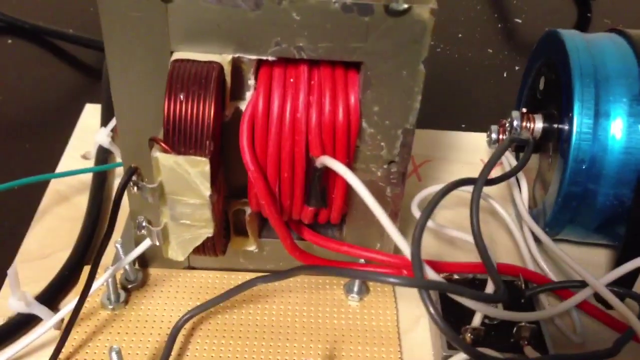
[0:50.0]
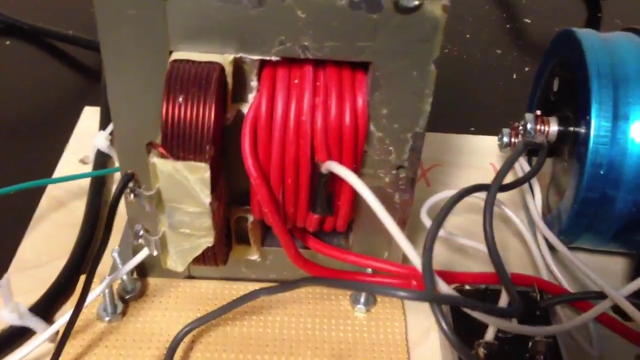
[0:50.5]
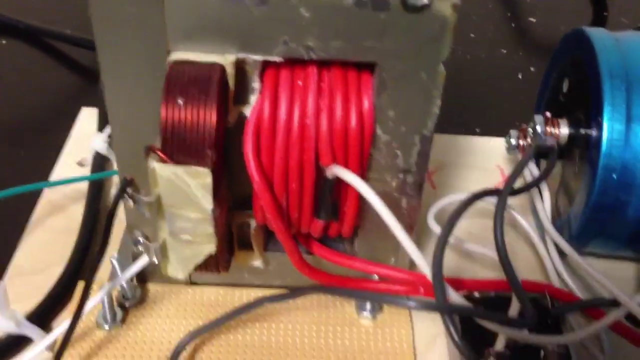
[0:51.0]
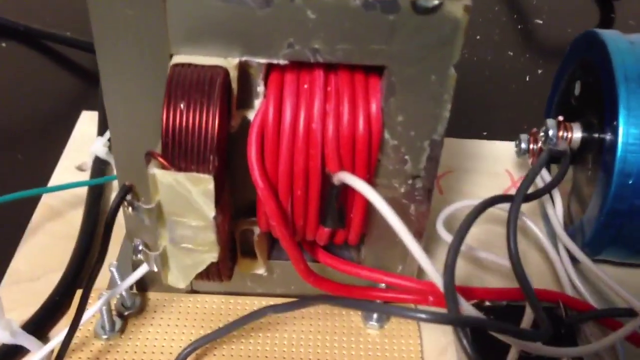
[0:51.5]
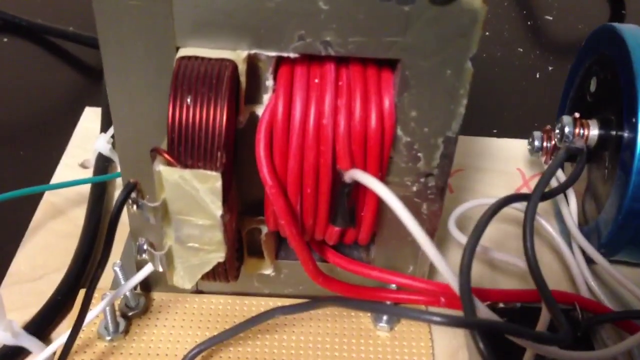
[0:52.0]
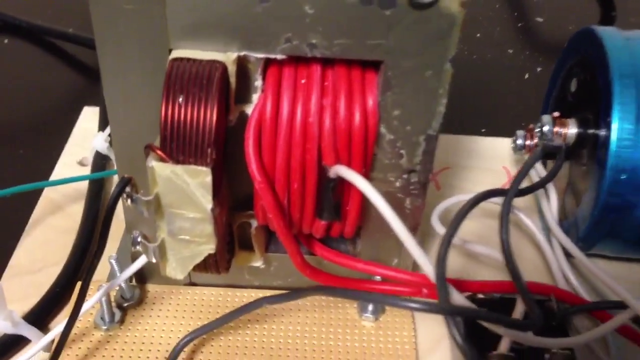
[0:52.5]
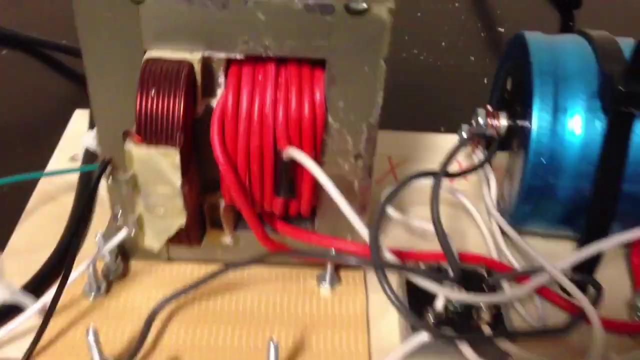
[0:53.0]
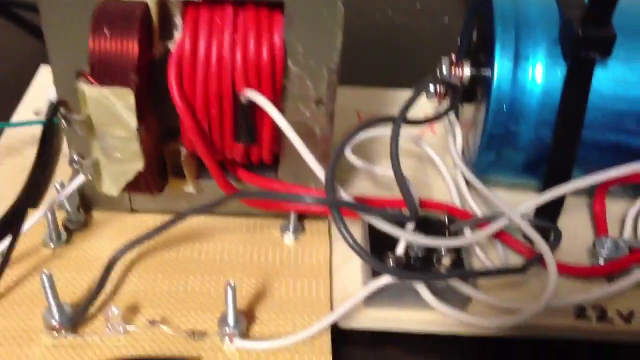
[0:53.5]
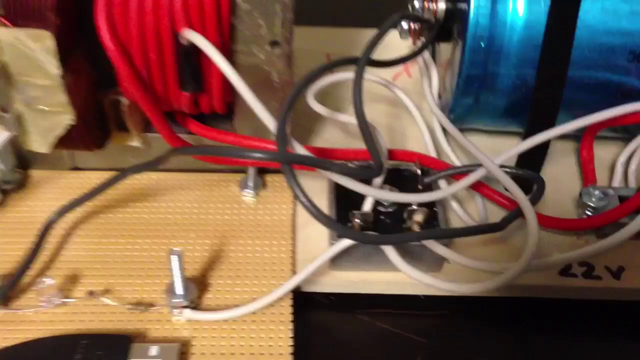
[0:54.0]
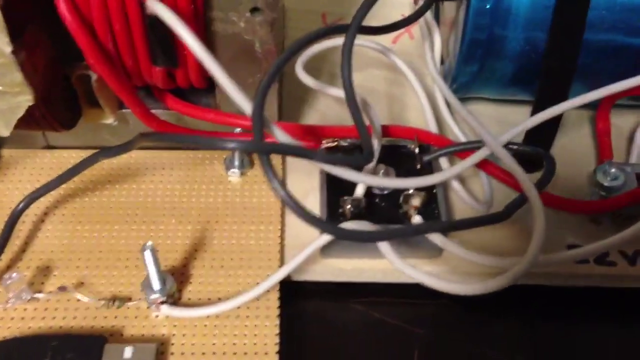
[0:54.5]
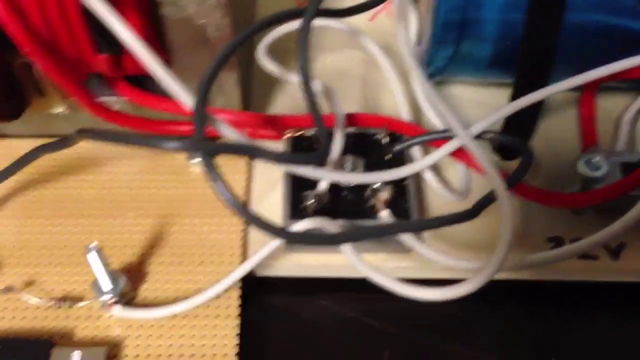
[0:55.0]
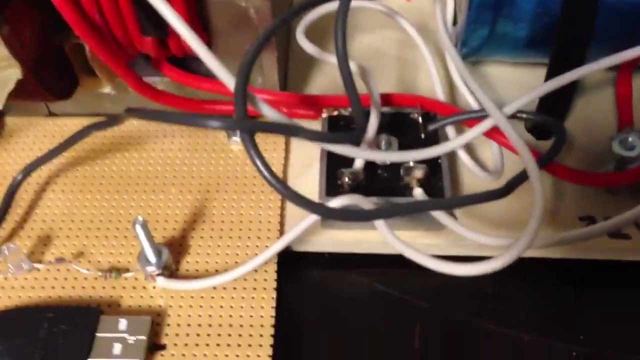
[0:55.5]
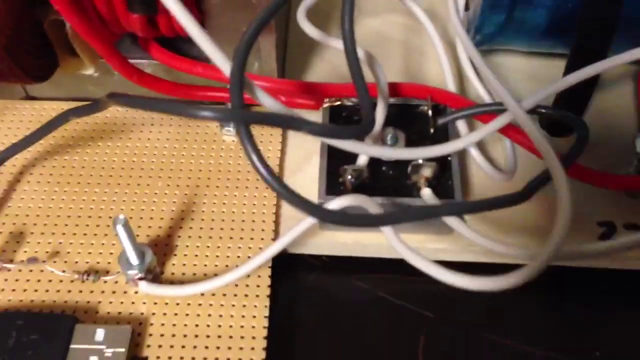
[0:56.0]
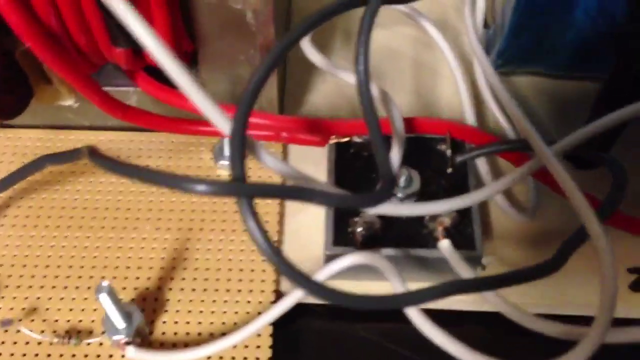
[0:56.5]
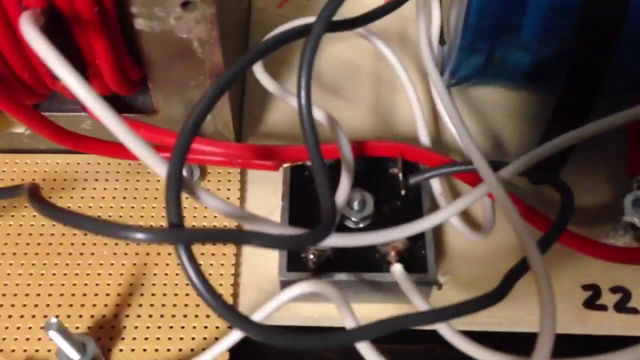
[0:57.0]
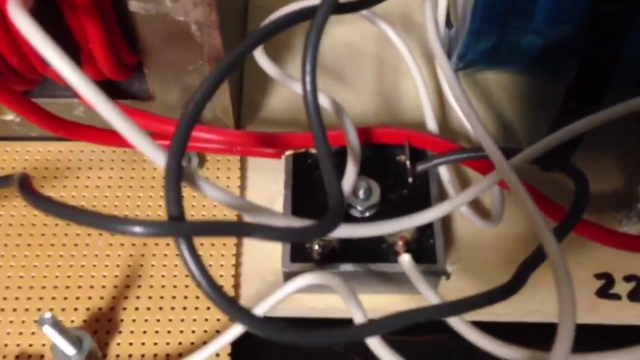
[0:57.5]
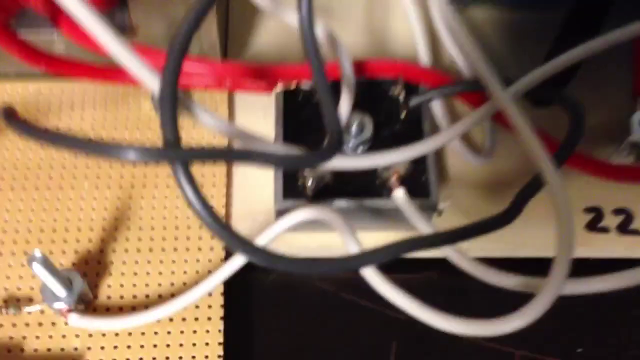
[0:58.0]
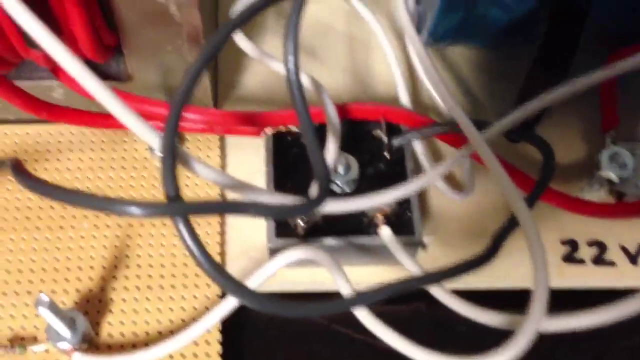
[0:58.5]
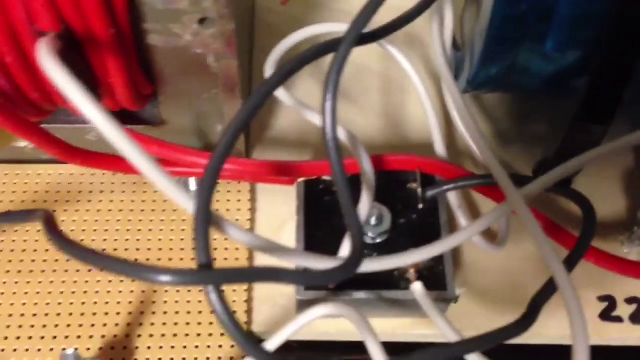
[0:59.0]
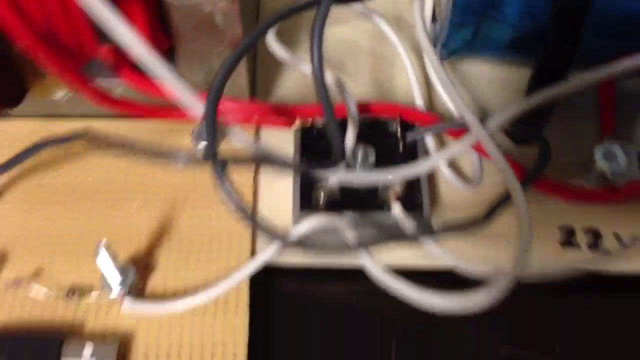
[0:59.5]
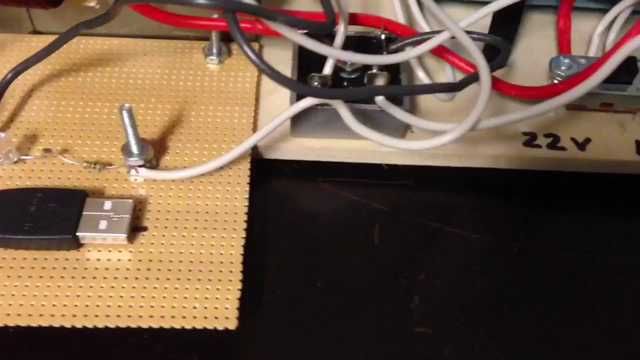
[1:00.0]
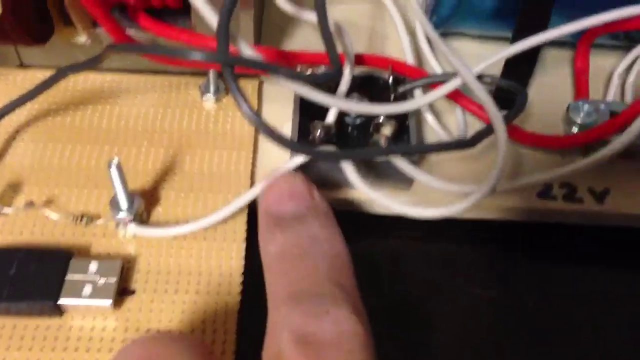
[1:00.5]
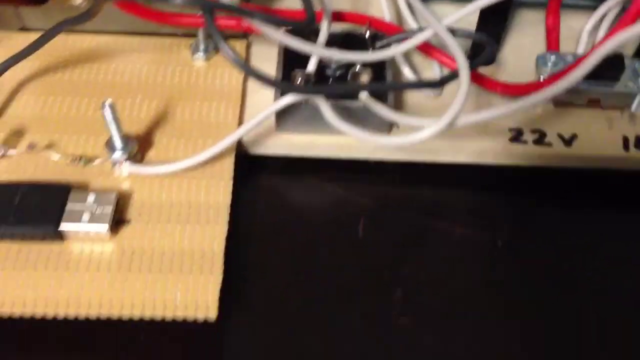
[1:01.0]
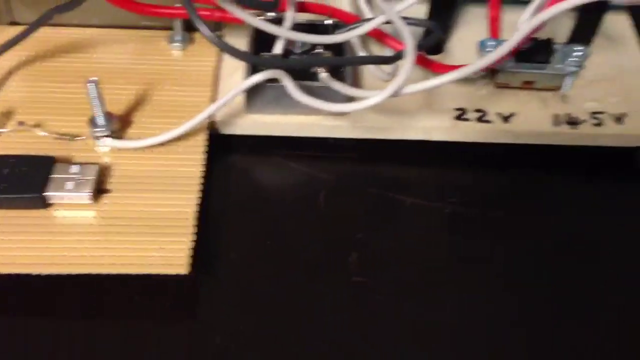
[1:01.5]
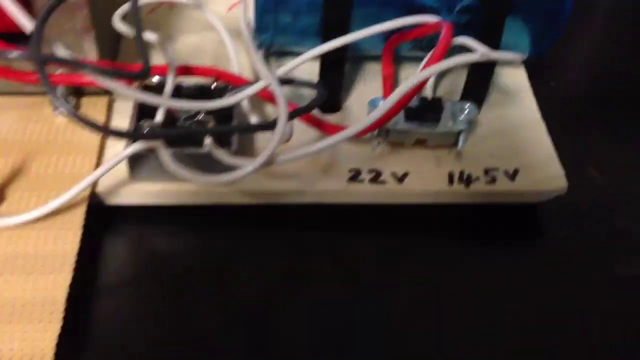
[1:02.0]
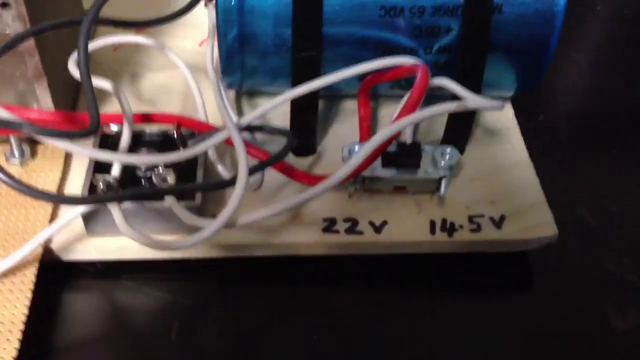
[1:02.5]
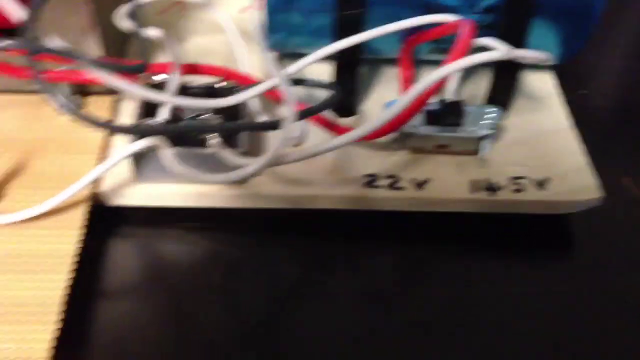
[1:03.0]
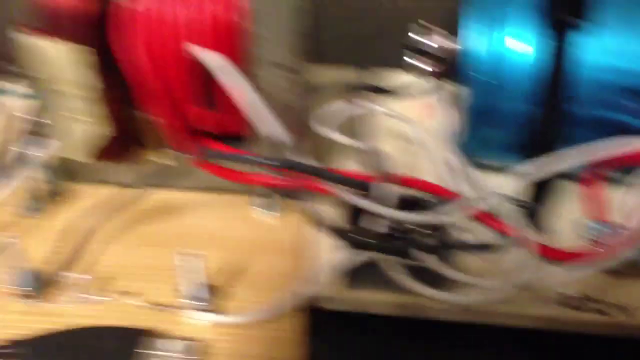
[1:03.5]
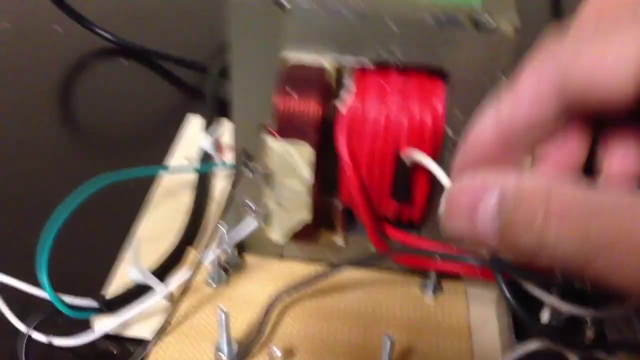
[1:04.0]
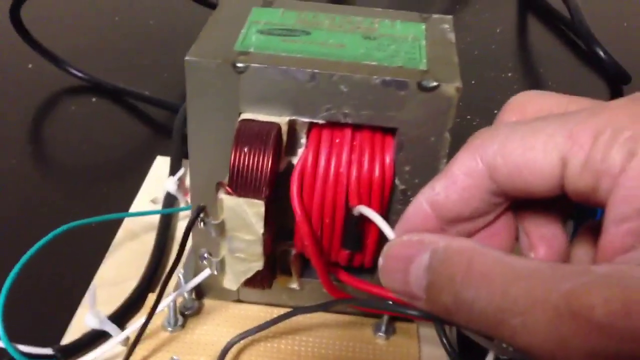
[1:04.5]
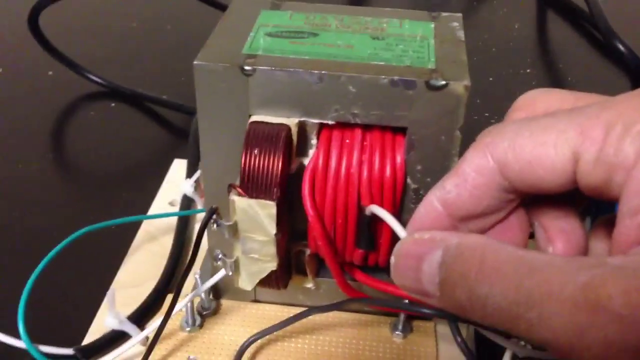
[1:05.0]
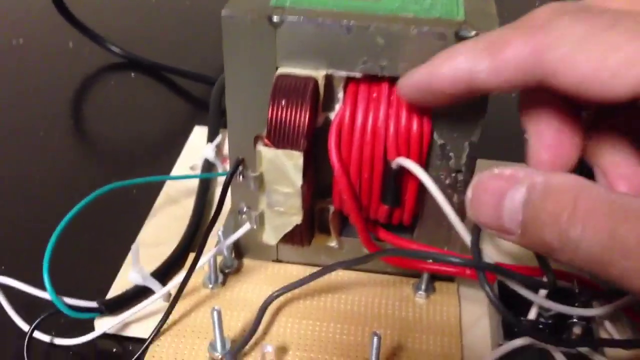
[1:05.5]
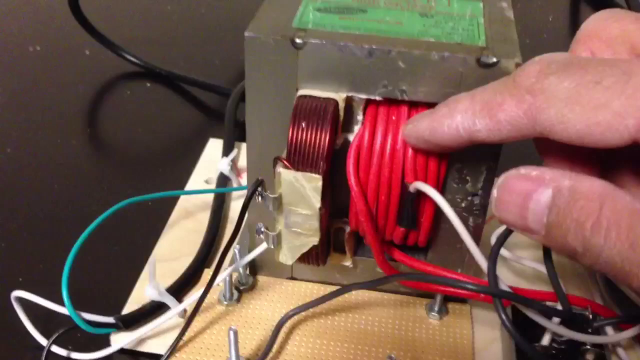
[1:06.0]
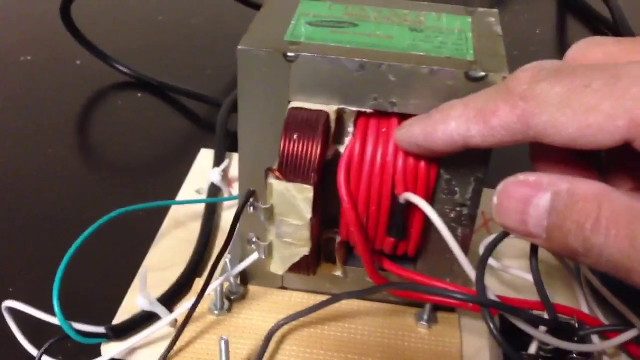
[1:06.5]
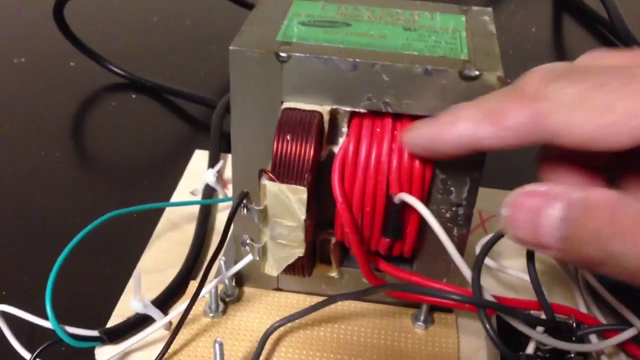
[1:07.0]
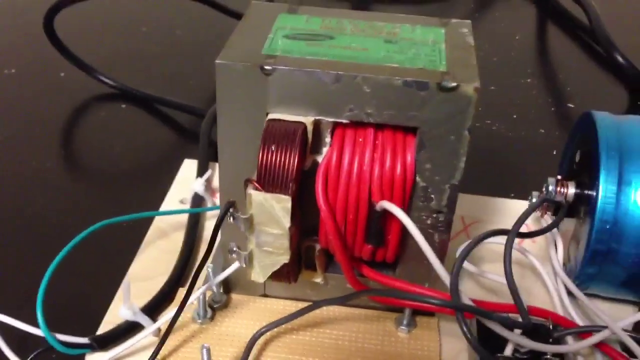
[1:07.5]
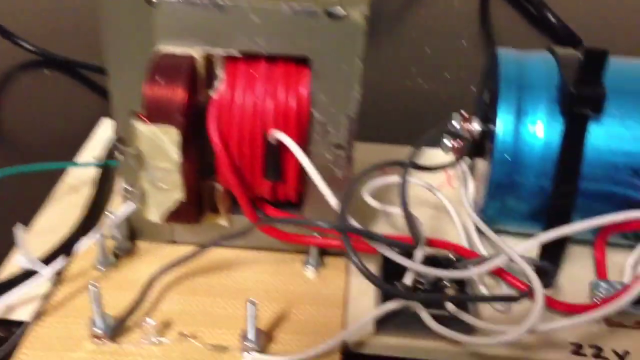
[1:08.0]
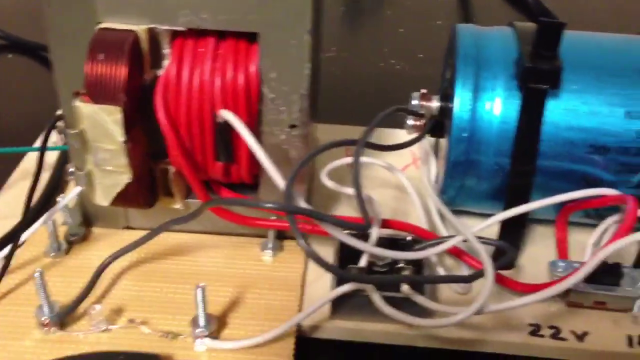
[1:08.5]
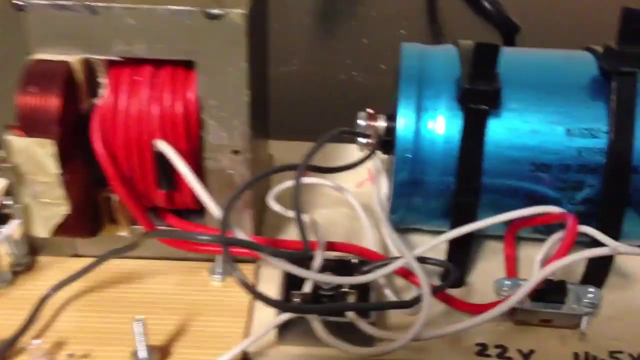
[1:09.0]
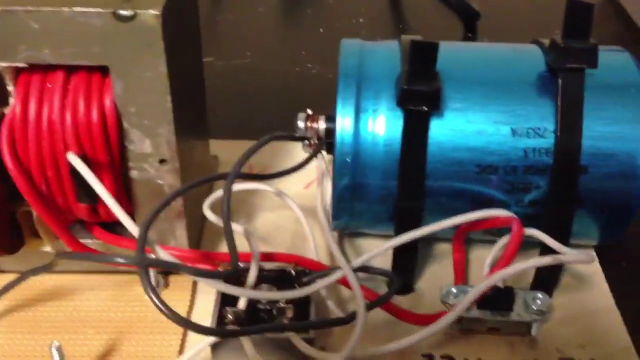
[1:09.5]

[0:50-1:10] The camera focuses on the metal block, wobbling a bit more, moves in a little further and pulls back out, then goes down to the bundle of wires connected to the square receptacle and stays on it briefly. From the lower right peg with a nut, a white wire comes out and is wired into the same receptacle. The camera views this from above, wobbling, with a shadow in the upper right. It pulls back slightly and moves down, showing the end of a USB connector in front of the pegs. A finger enters from the middle bottom and points very briefly at the square receptacle. The camera pans right to some kind of small metal clamp with nuts, about the same width as the receptacle, holding the red and white wires on top. In front of it, written in Sharpie marker, is "22V", then a space, then "14.5V". The camera moves over to the red block with the red wires, and a hand comes in from the right, grabs the white wire between thumb and forefinger, then points at the red bundled wire with the index finger. The camera pans right to the metal cylinder and moves slightly down.